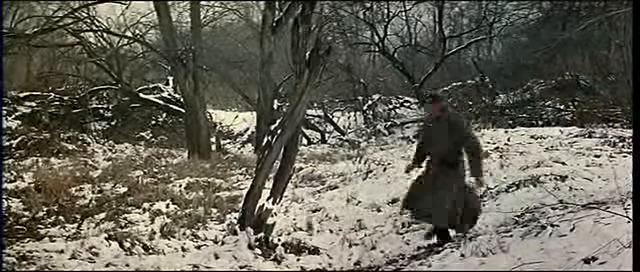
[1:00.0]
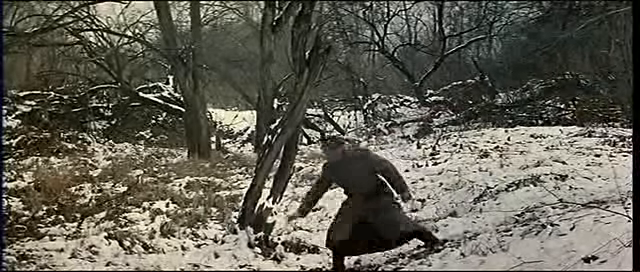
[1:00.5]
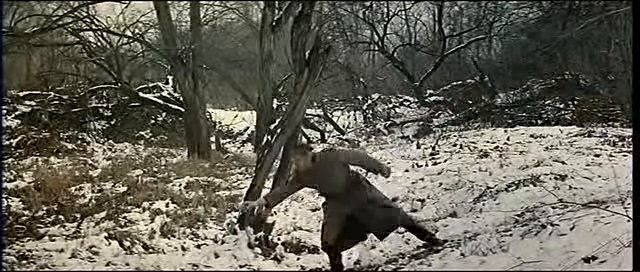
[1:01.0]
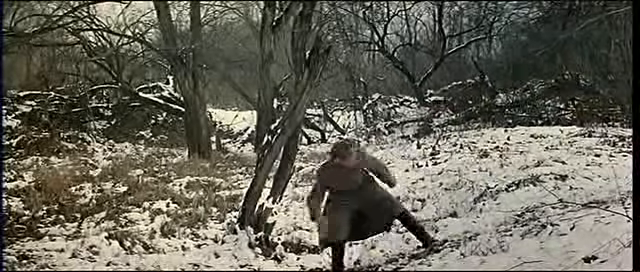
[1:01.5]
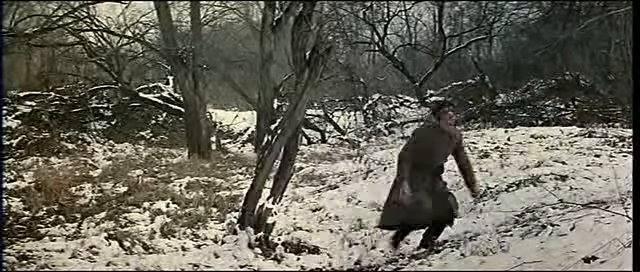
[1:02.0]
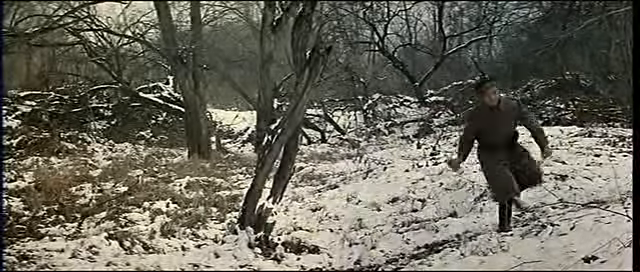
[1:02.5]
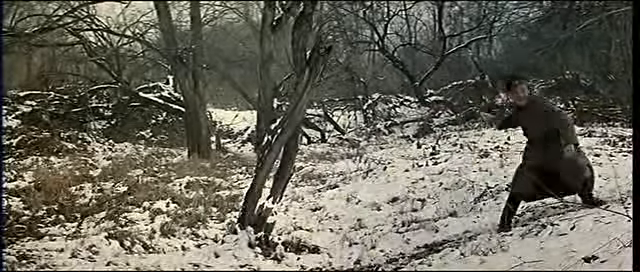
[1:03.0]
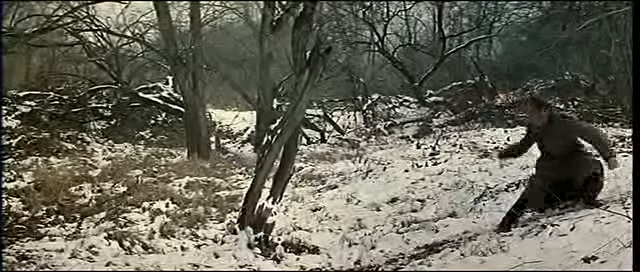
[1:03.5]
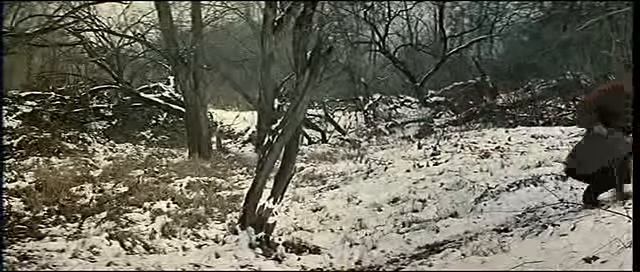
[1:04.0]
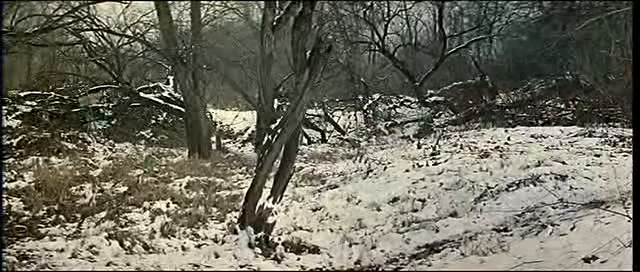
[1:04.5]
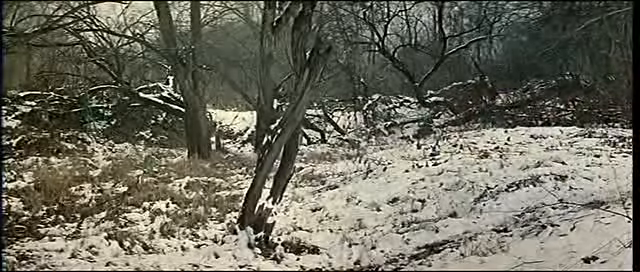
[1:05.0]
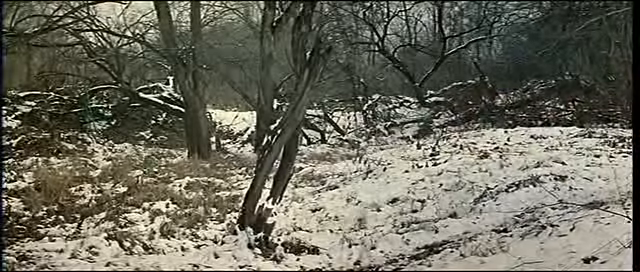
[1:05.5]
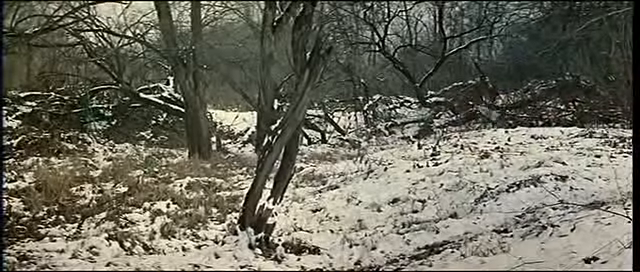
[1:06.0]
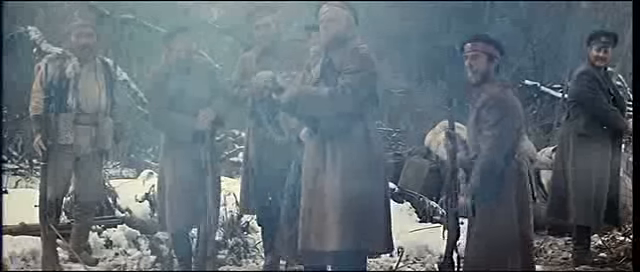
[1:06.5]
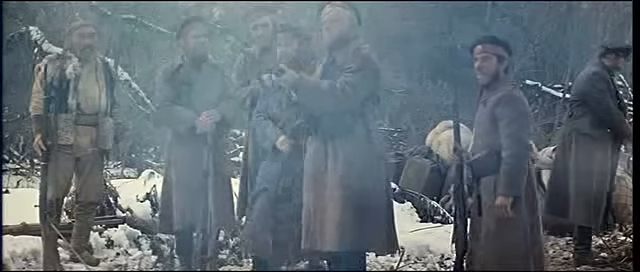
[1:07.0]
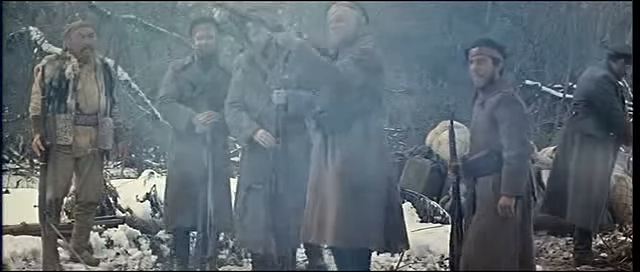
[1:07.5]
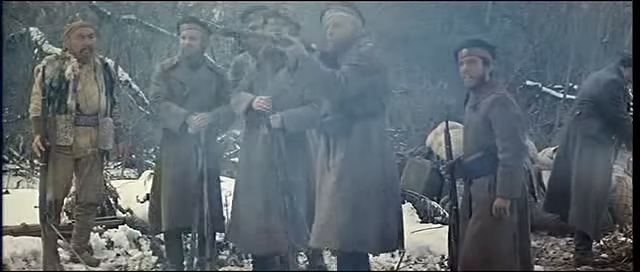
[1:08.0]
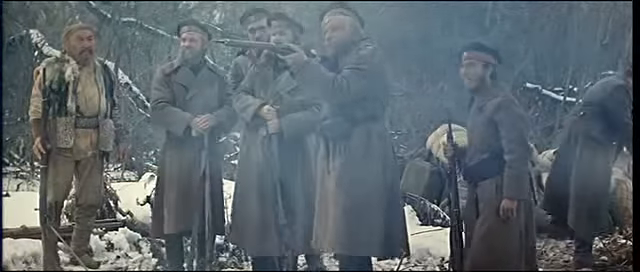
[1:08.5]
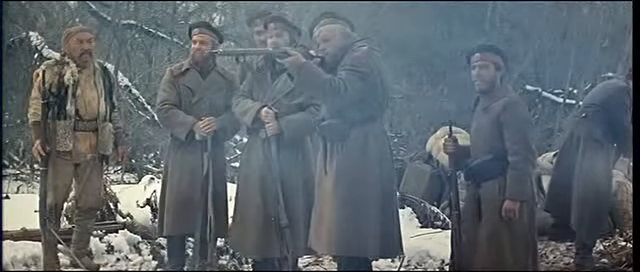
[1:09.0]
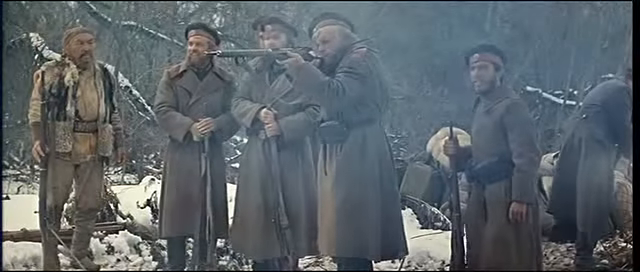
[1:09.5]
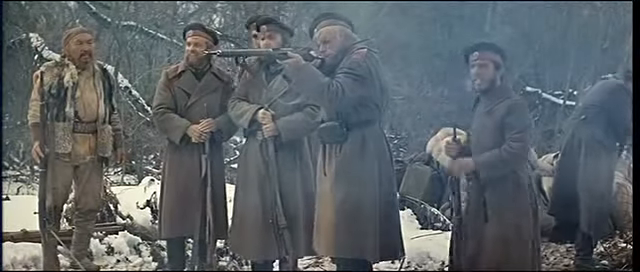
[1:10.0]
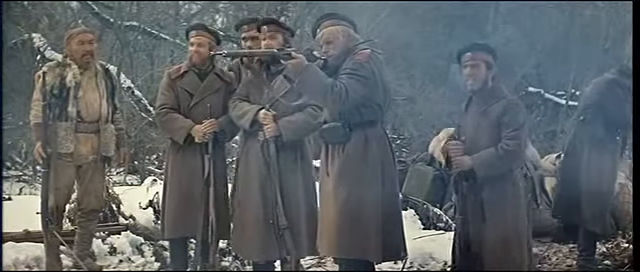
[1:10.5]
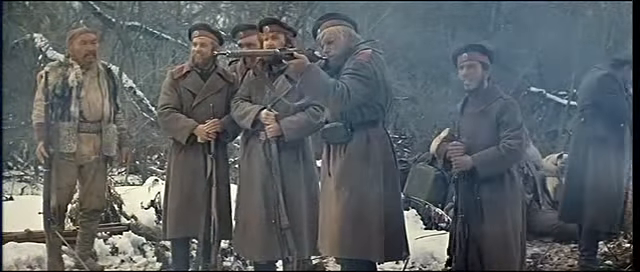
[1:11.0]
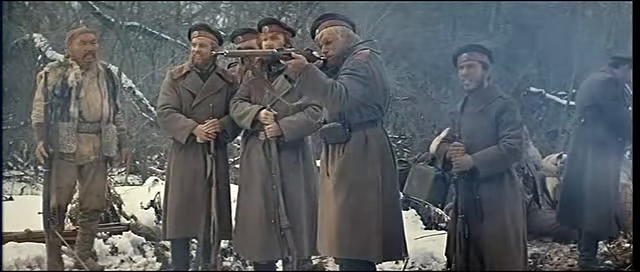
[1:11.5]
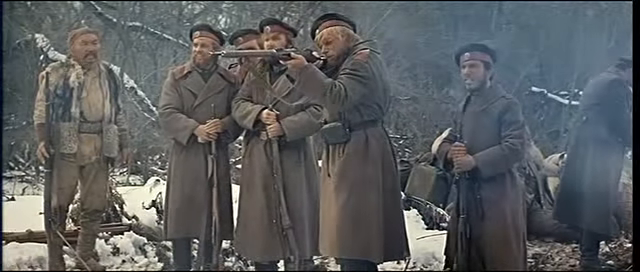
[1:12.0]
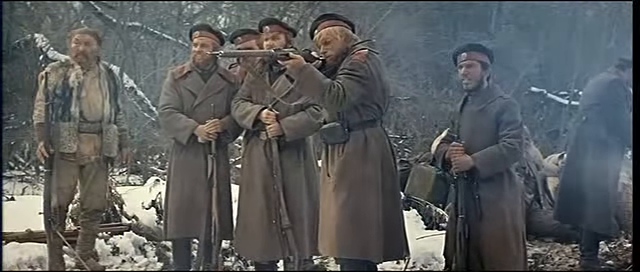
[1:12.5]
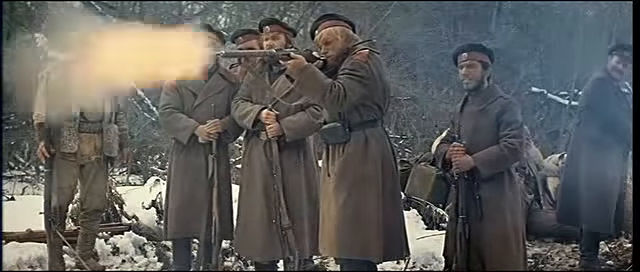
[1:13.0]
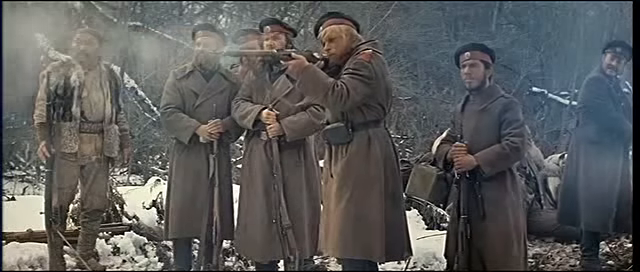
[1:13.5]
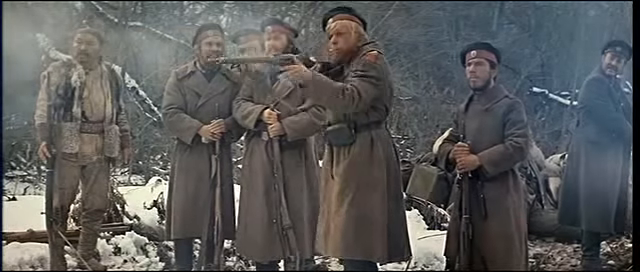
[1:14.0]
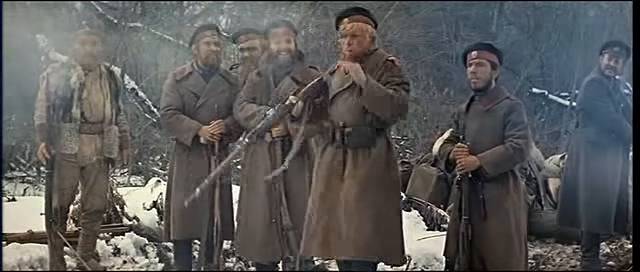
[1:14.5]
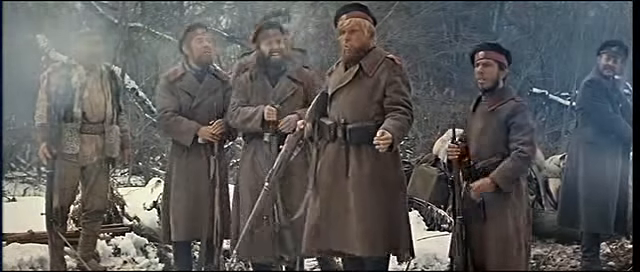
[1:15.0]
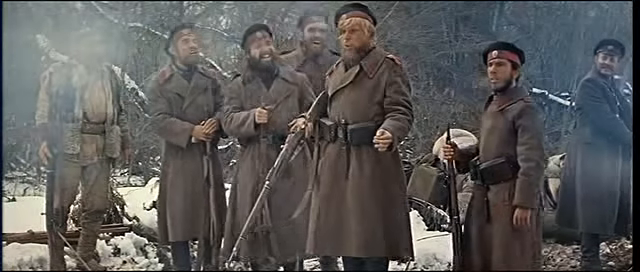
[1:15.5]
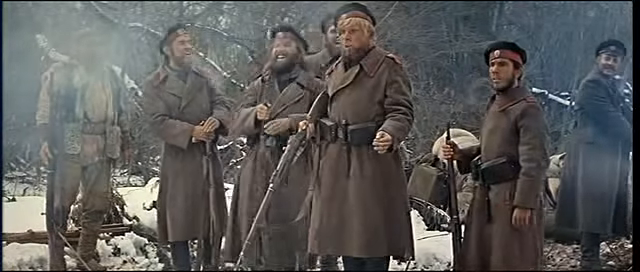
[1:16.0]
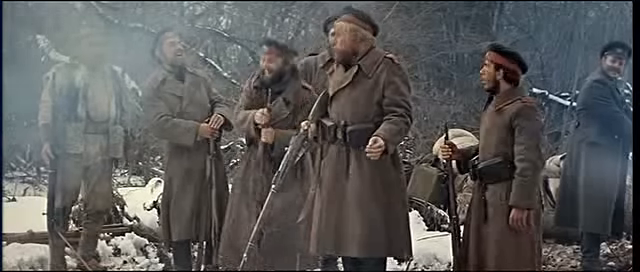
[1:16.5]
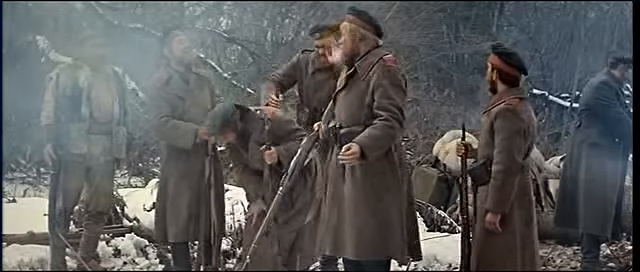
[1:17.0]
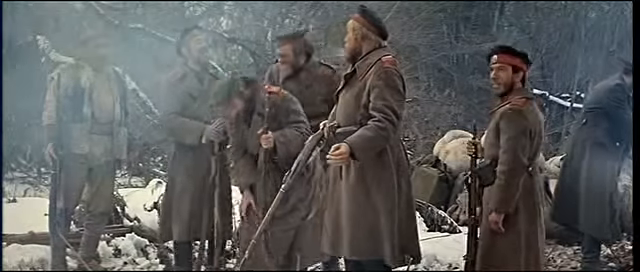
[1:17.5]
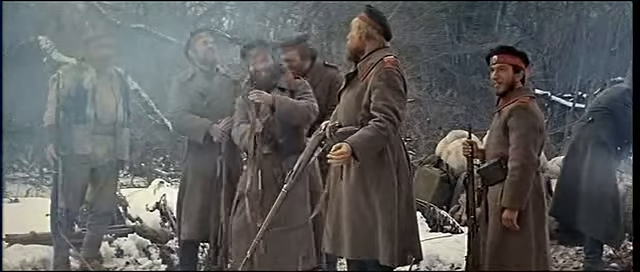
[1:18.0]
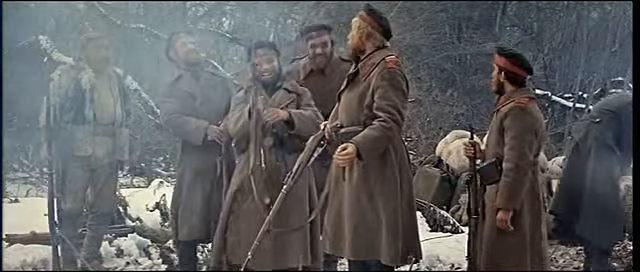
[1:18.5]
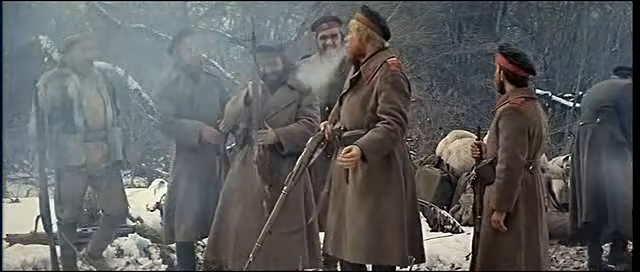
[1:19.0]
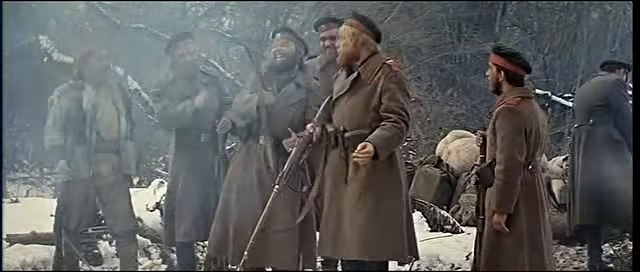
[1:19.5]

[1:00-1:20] On the snowy mountain, the uniformed man reaches for the bottle and gets it, then walks from left to right, kind of crouched and looking toward the camera, and swings the bottle hard to the left. It swings to the right and keeps on swinging. The fourth man of the group readies his weapon to take a shot at the bottle. He looks through the gun almost as if looking through a scope, even though it has no scope; it looks like a hunter rifle and is fairly long. He takes the shot and then lowers the weapon. The uniformed man to his left seems to be laughing at him, takes a cigarette out of his mouth and exhales a lot of smoke. The man to his right also exhales a lot of smoke, but it looks like it is just from the cold weather.